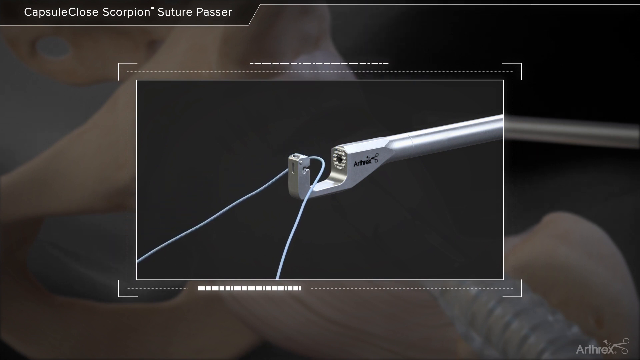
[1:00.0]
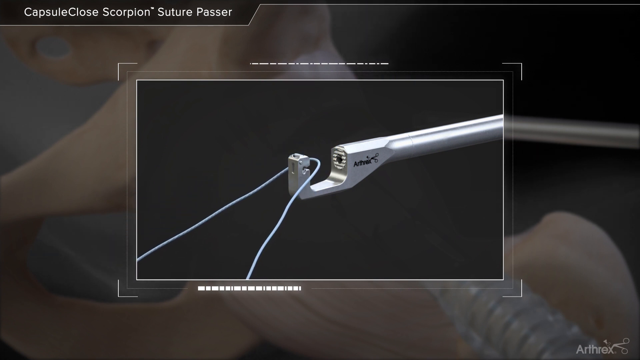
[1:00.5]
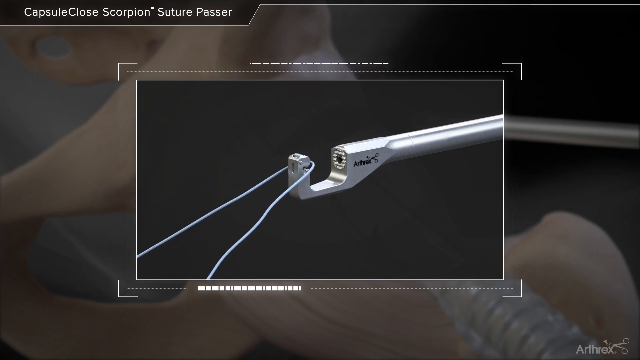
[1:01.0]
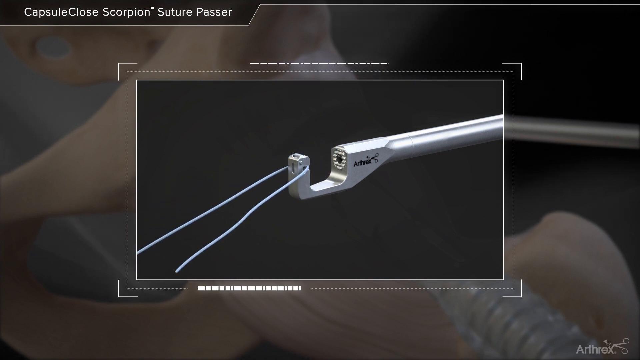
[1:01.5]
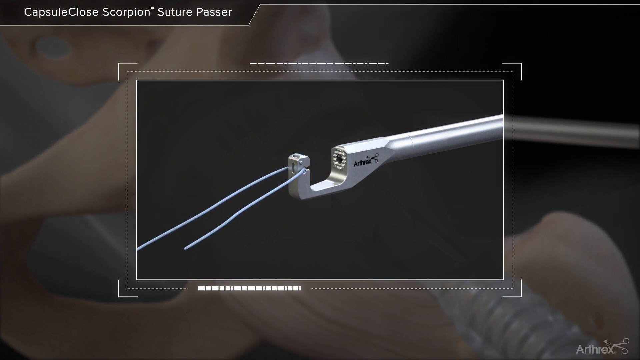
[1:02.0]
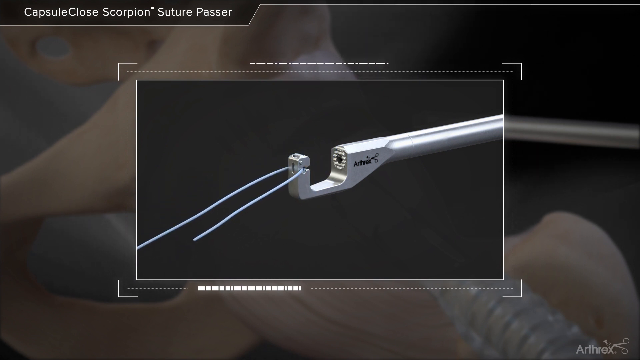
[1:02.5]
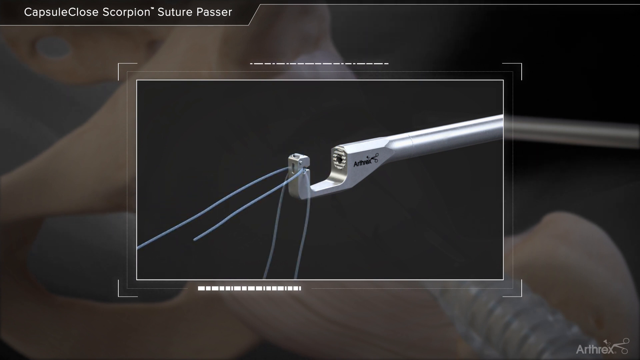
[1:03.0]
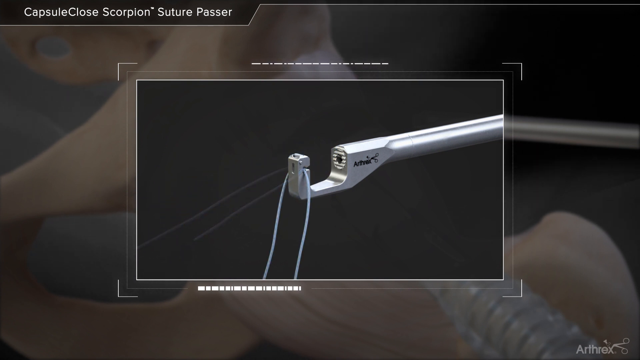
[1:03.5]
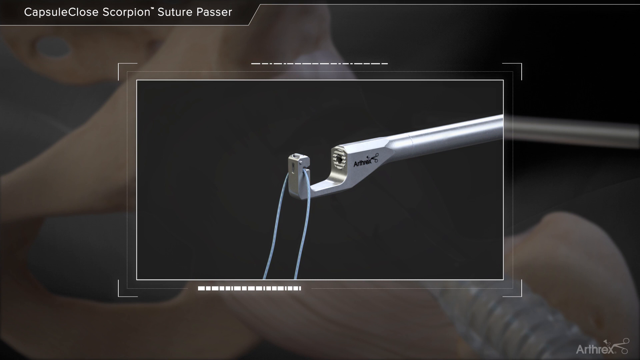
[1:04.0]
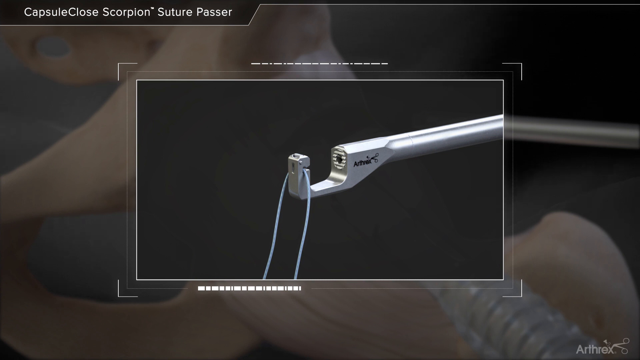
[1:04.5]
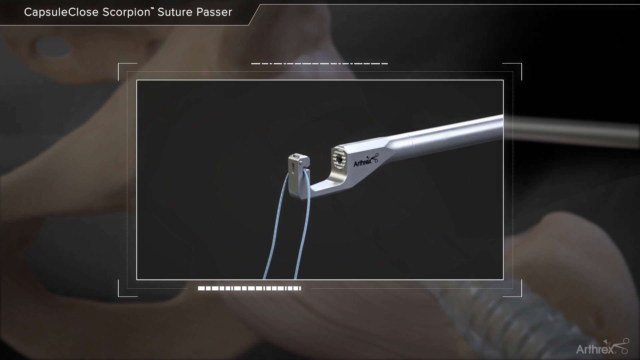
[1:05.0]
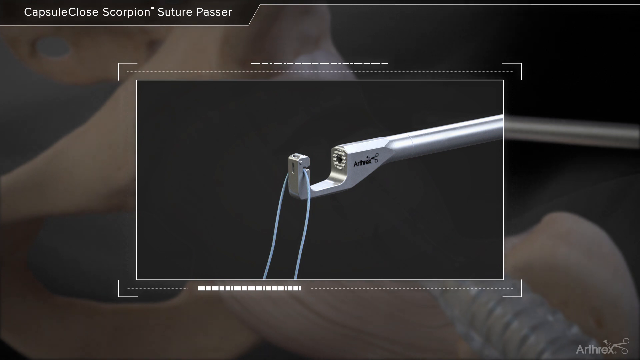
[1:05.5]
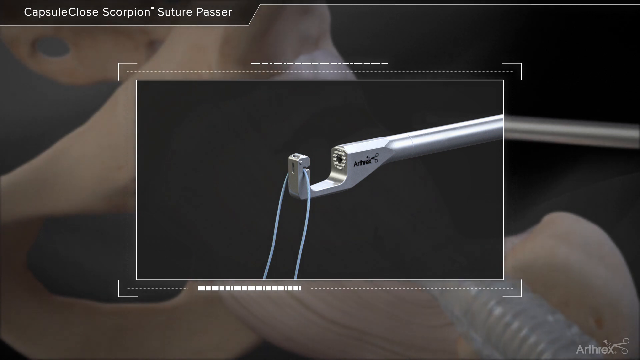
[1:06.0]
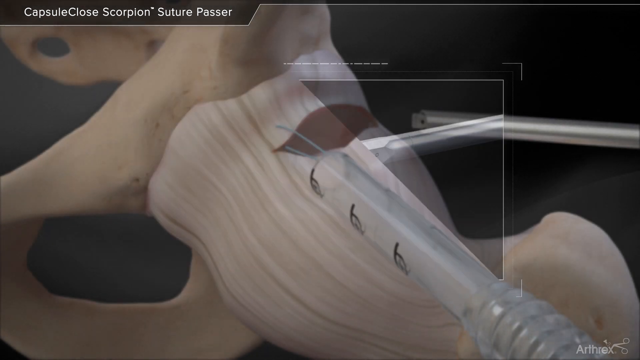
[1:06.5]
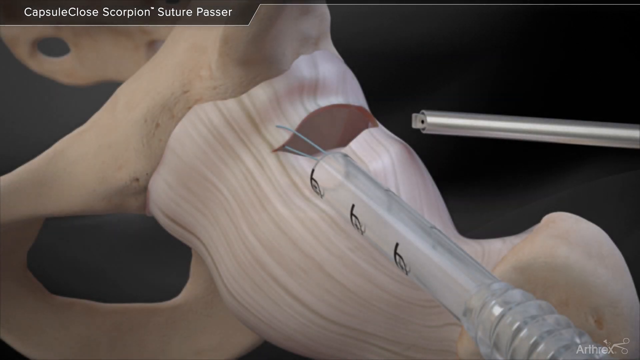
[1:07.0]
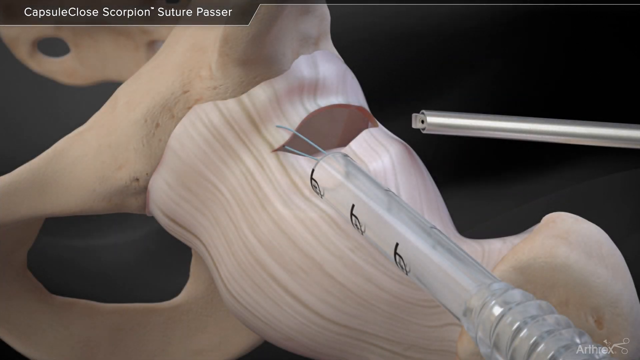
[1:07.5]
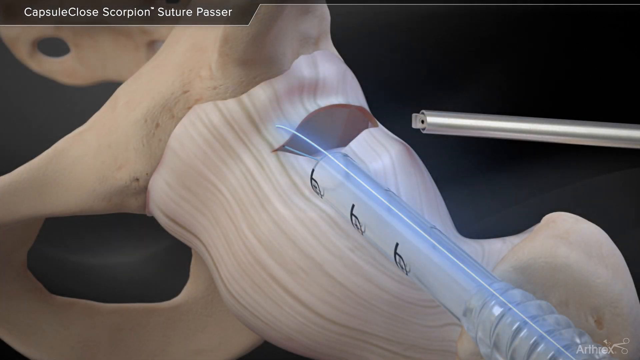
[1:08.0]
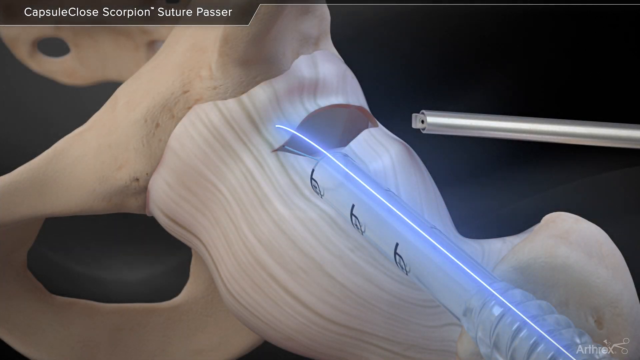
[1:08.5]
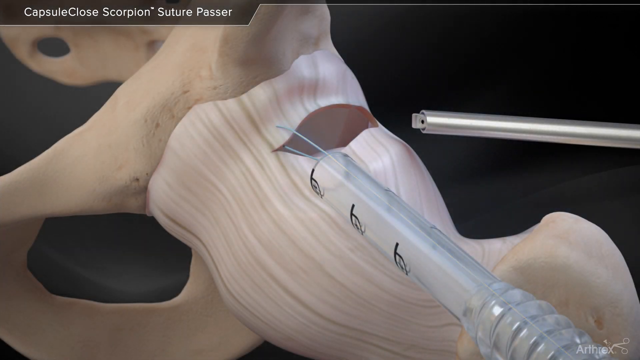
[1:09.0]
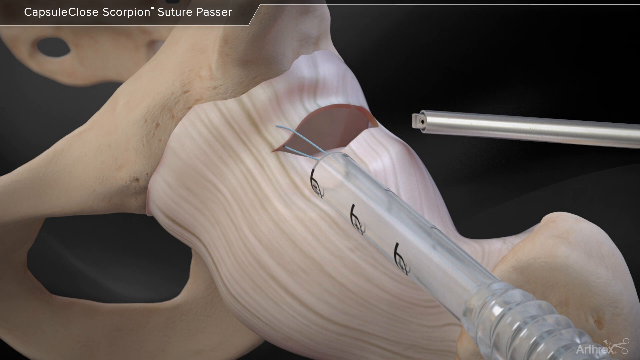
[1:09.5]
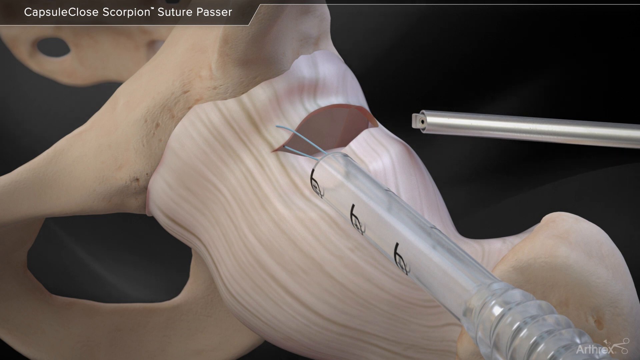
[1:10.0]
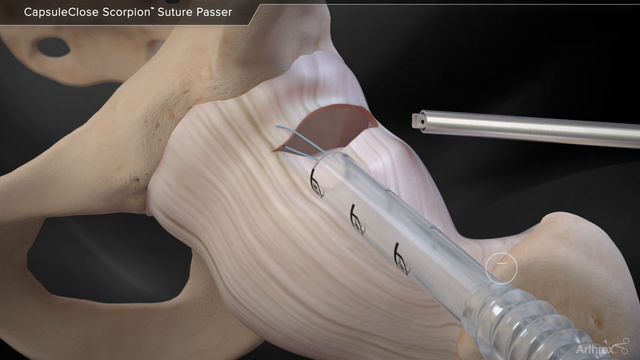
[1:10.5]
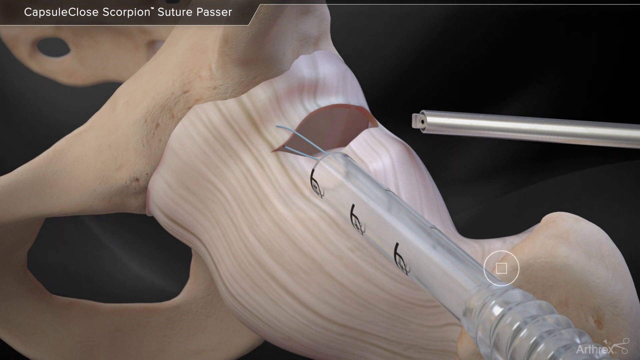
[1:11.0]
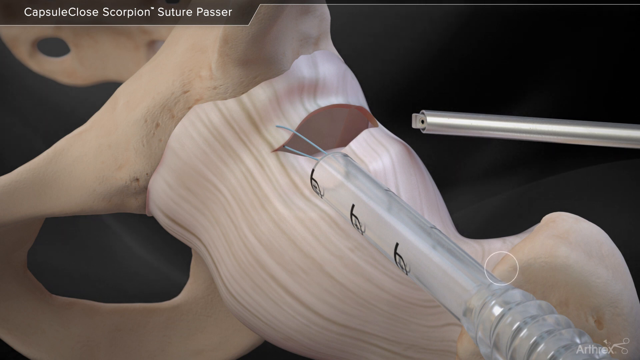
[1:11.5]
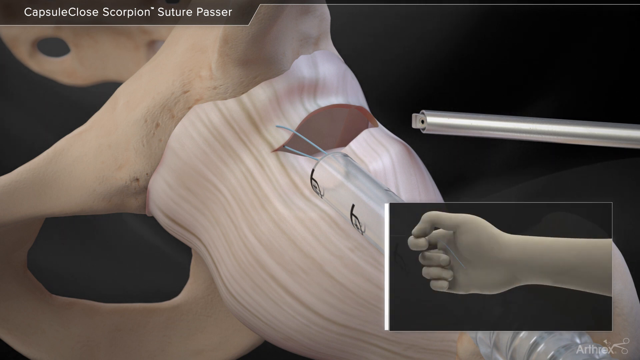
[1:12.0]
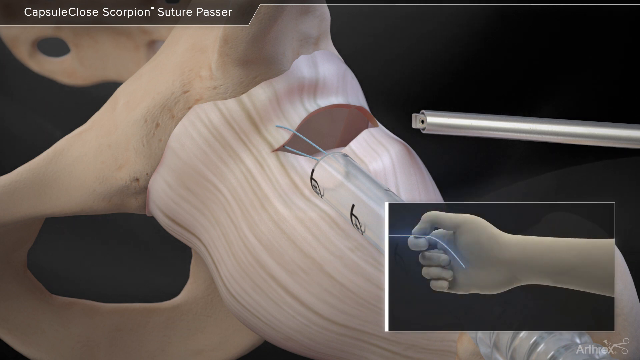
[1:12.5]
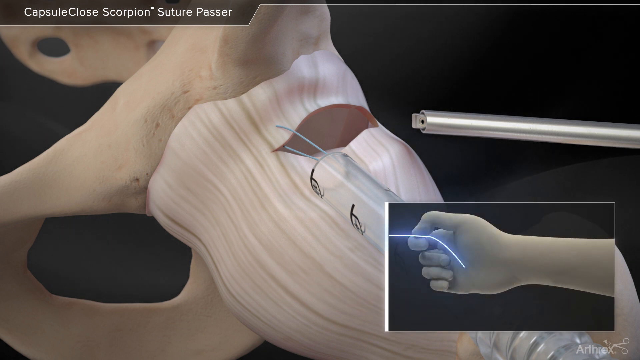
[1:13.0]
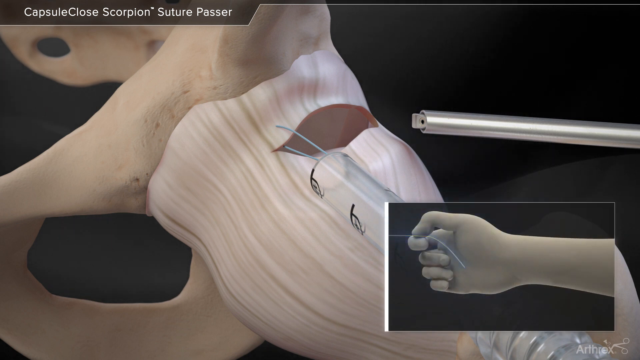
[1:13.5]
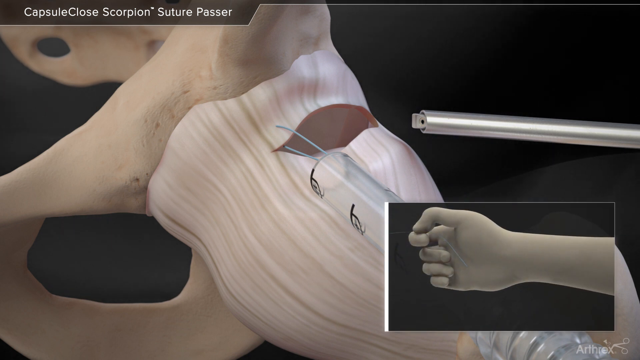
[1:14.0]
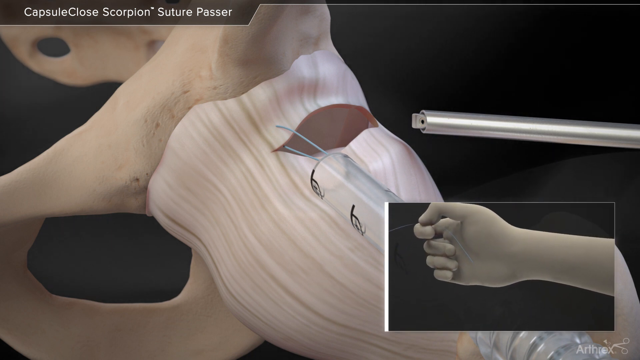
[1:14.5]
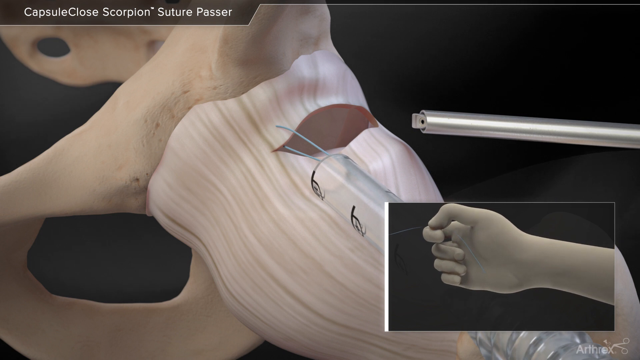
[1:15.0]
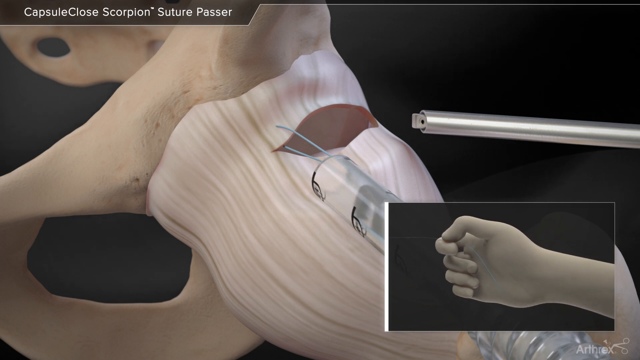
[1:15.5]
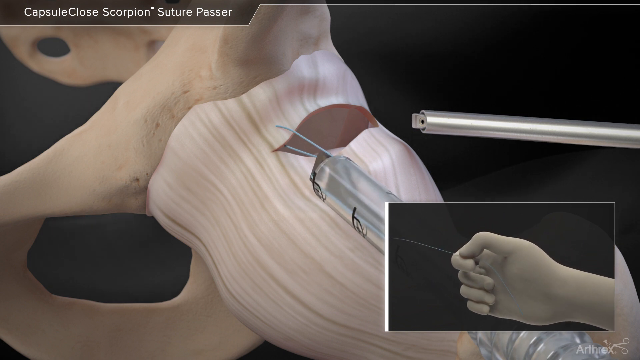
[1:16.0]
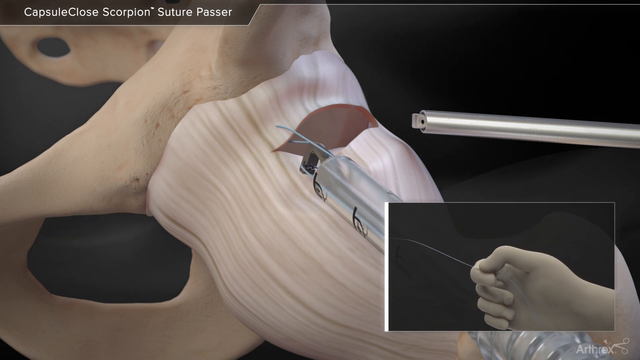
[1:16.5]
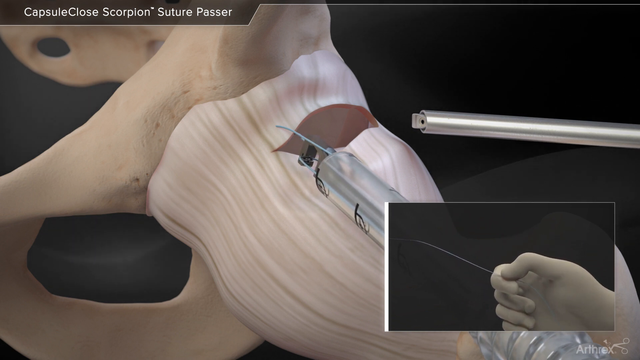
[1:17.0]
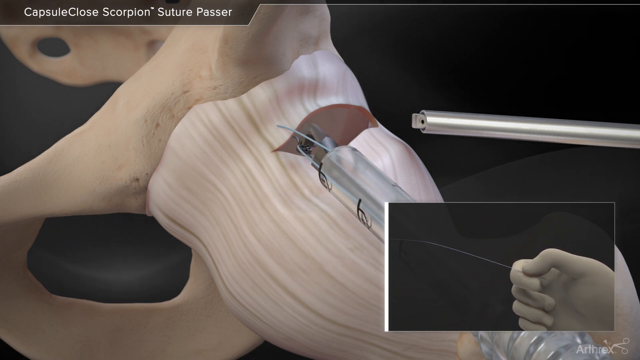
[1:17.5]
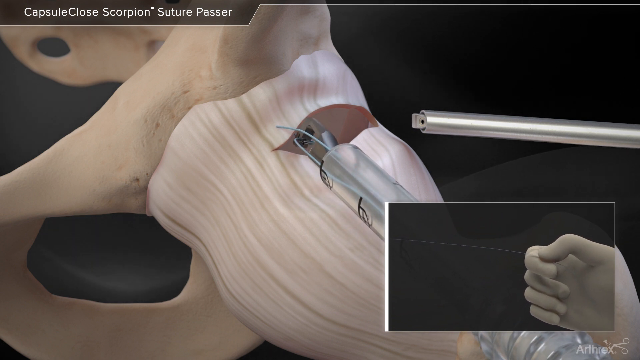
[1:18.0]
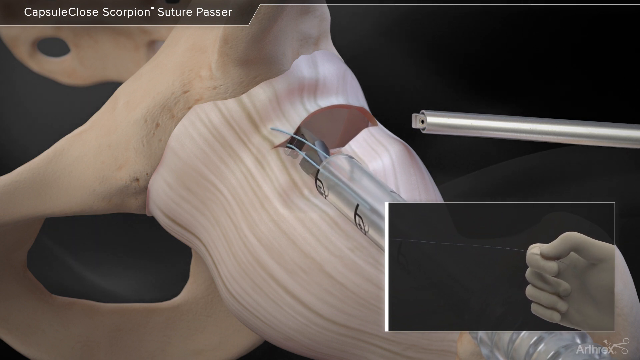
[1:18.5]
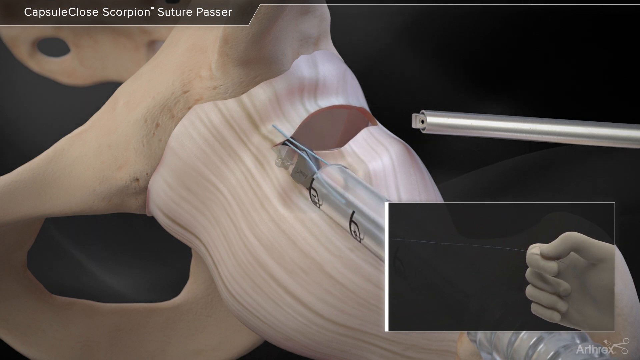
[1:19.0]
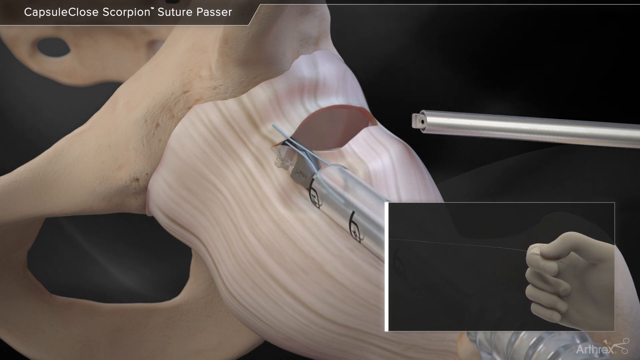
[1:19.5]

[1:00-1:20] A rectangle appears to zoom in further, apparently on the tool that looks like an ear-piercing tool. A wire with a loop in it gets straightened out with the other tool, and the tool seems to be straightened or pulled. The object previously taken for a needle no longer looks like a needle. The appliance on the left appears to be in use, and the thin metal rod with hooks on both ends looks like it is being used by both tools, not just the one on the left.